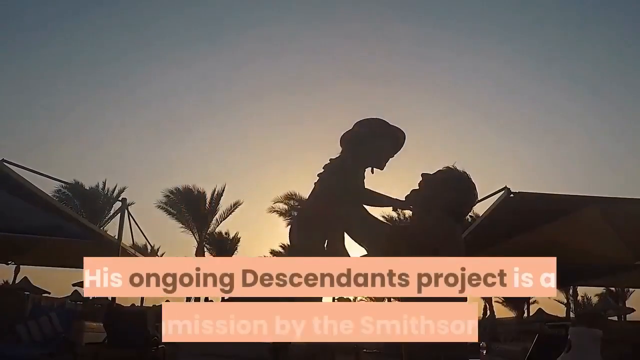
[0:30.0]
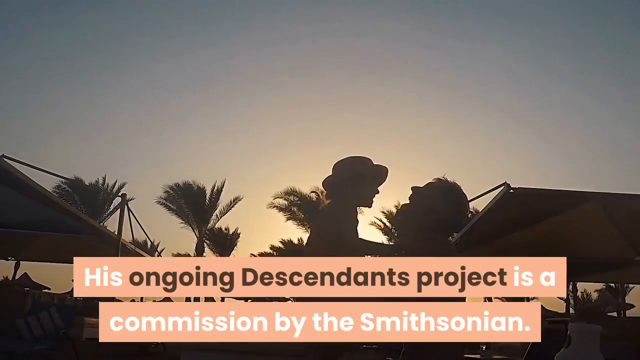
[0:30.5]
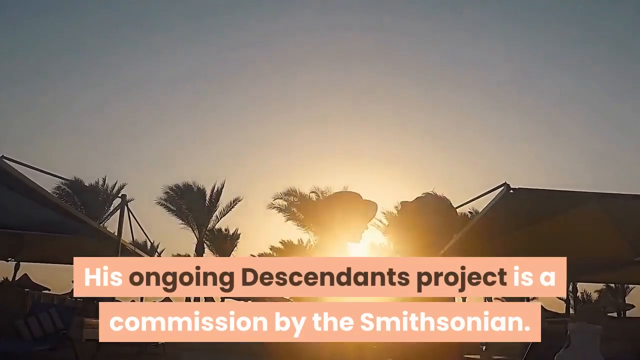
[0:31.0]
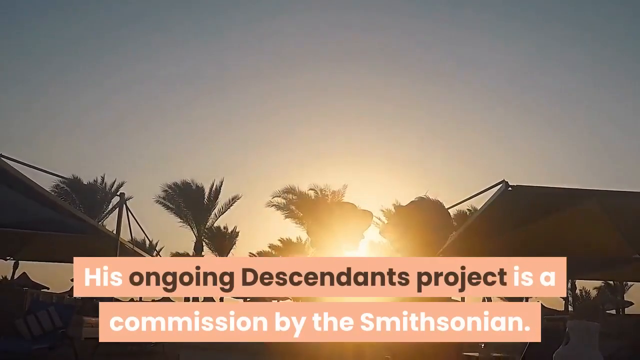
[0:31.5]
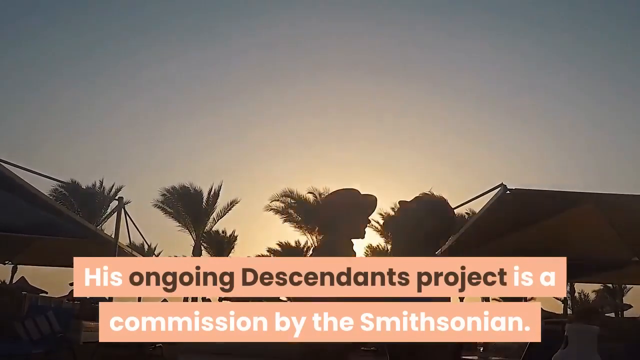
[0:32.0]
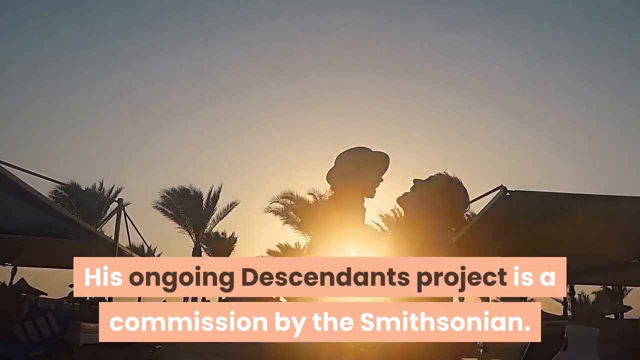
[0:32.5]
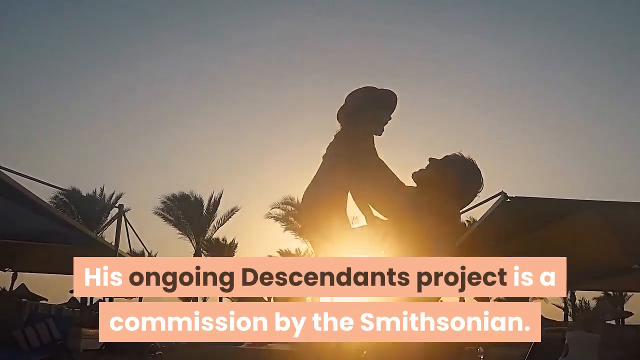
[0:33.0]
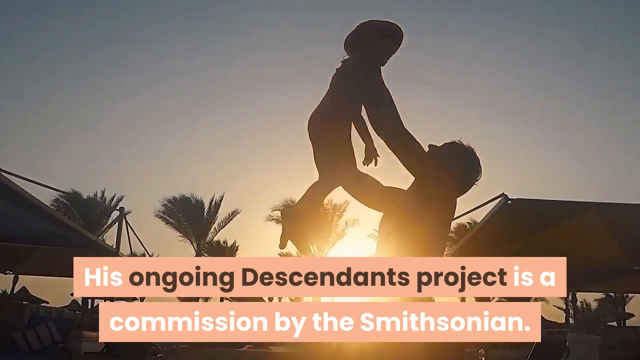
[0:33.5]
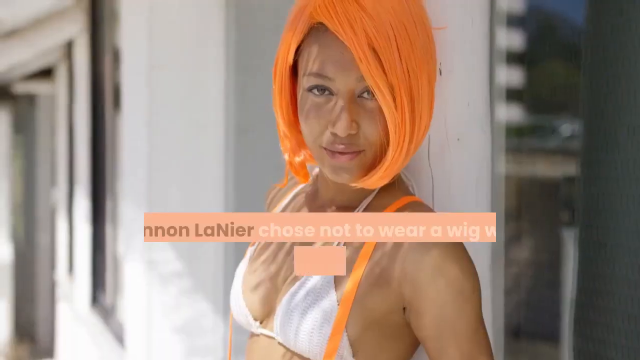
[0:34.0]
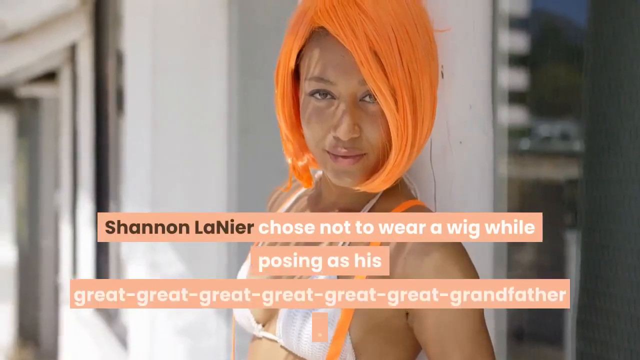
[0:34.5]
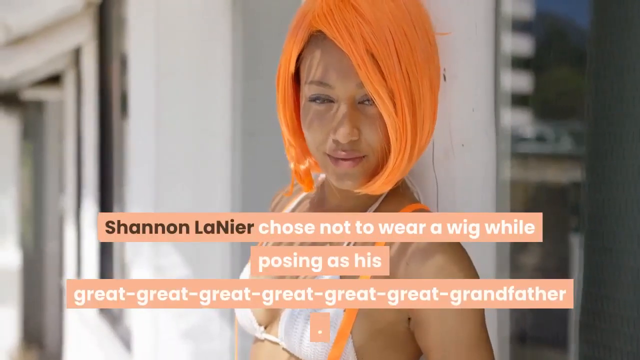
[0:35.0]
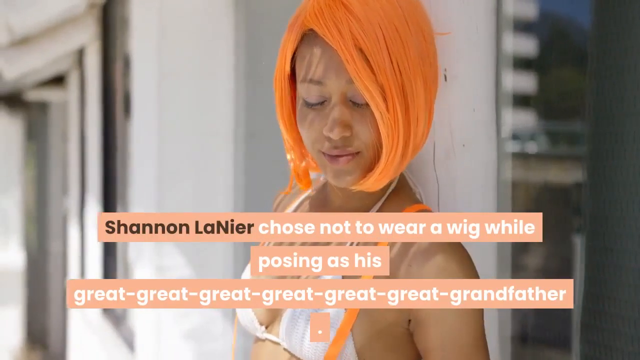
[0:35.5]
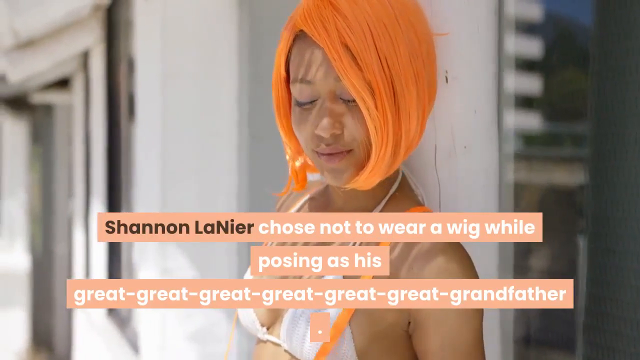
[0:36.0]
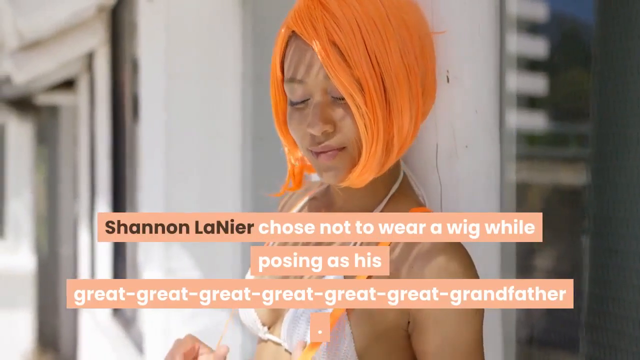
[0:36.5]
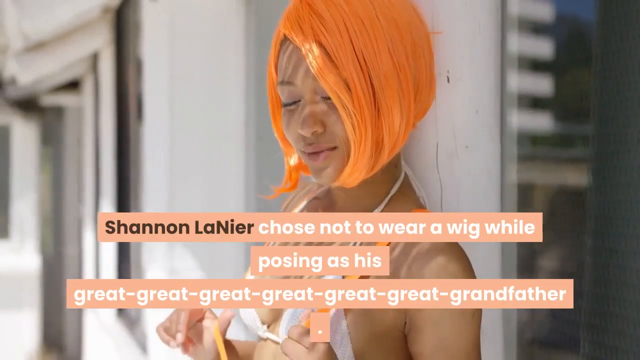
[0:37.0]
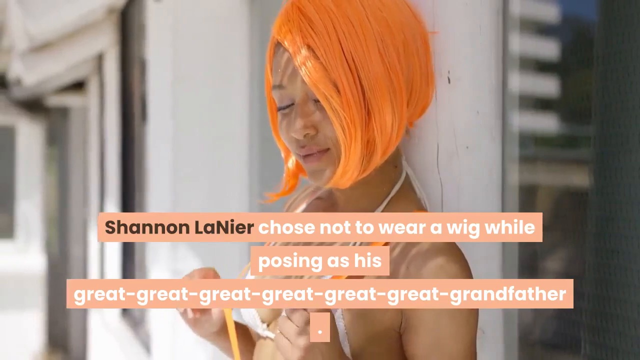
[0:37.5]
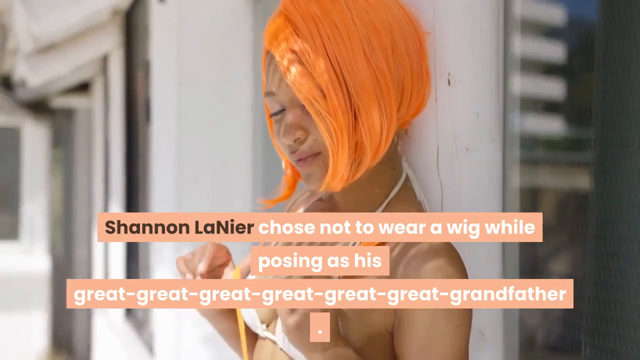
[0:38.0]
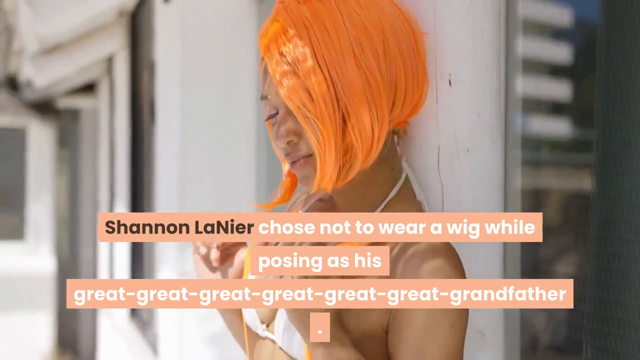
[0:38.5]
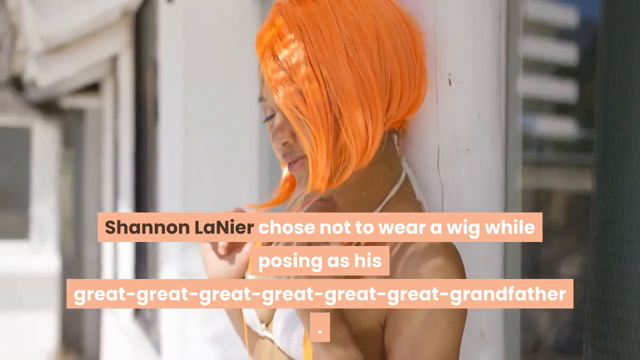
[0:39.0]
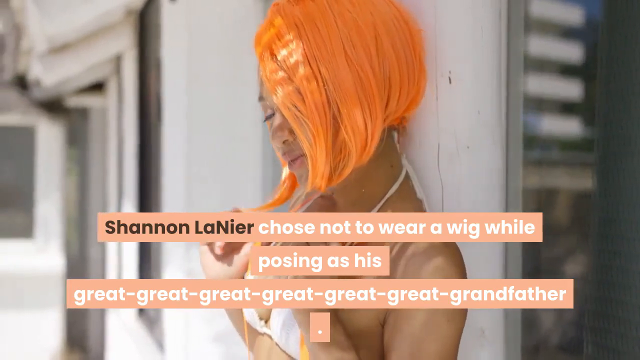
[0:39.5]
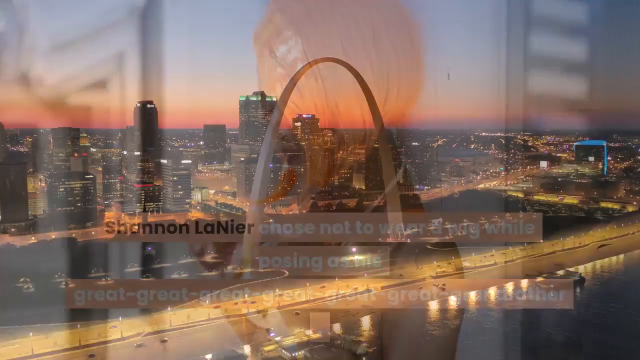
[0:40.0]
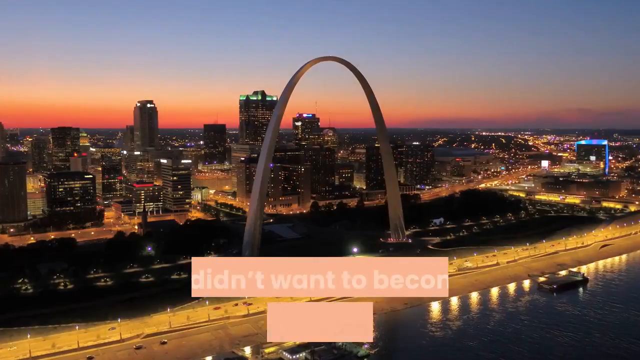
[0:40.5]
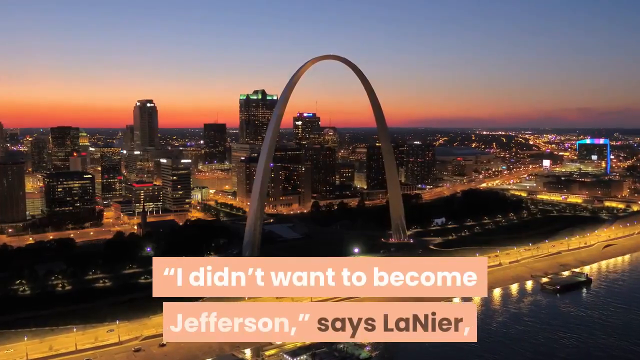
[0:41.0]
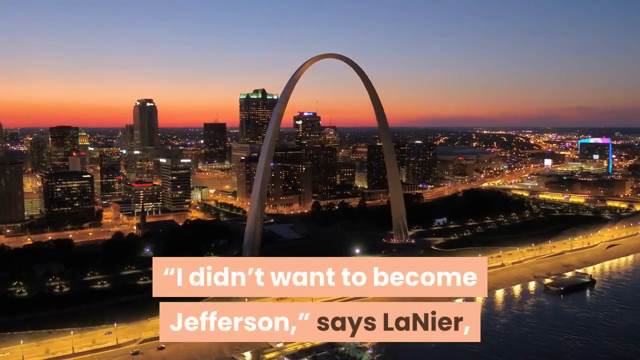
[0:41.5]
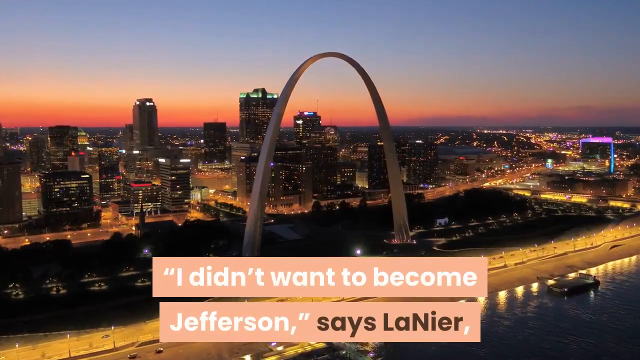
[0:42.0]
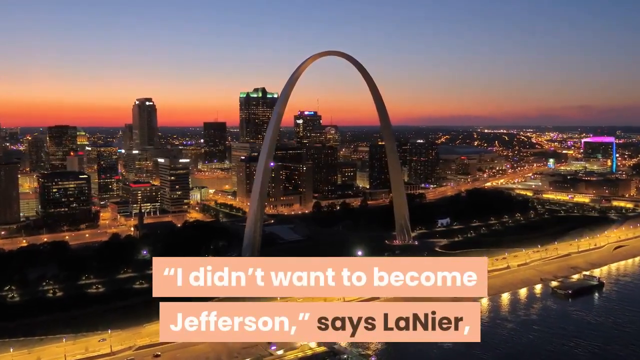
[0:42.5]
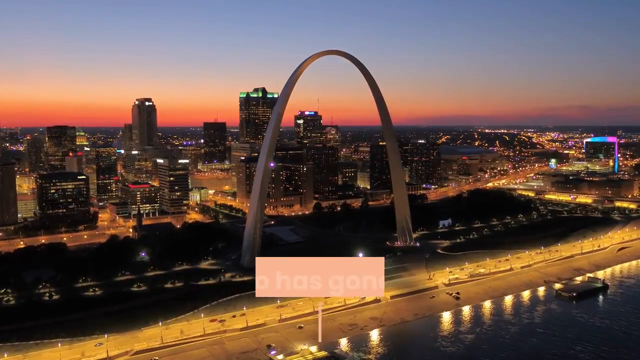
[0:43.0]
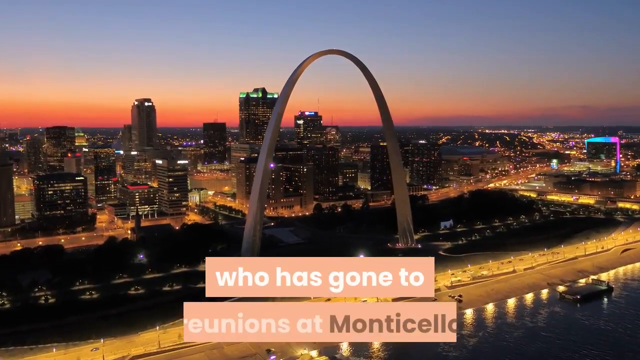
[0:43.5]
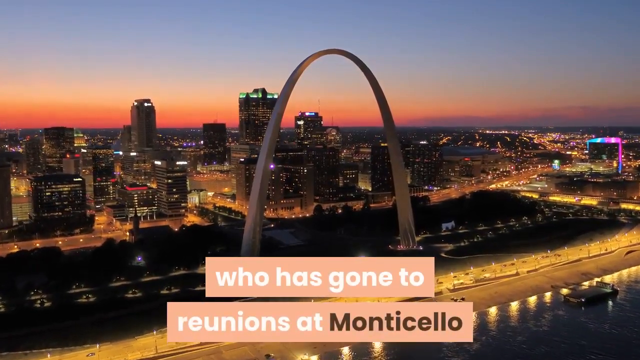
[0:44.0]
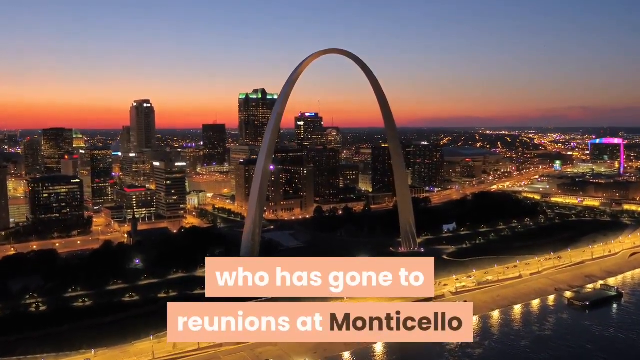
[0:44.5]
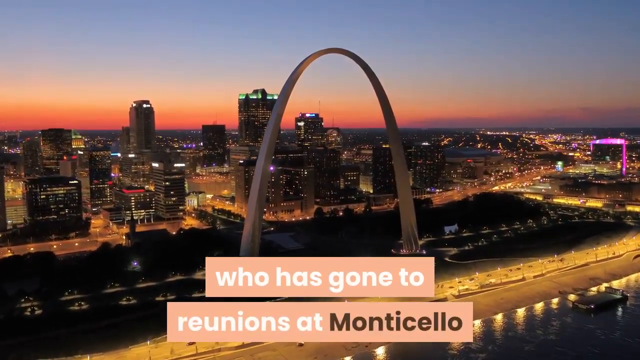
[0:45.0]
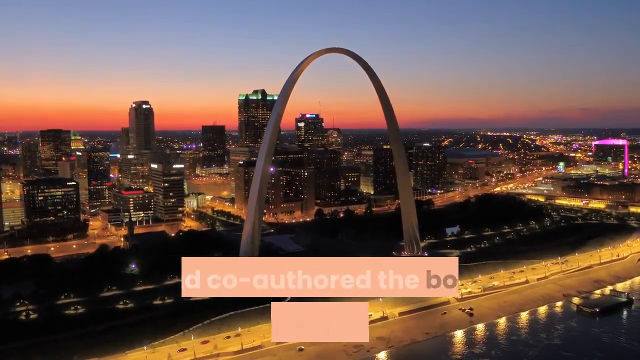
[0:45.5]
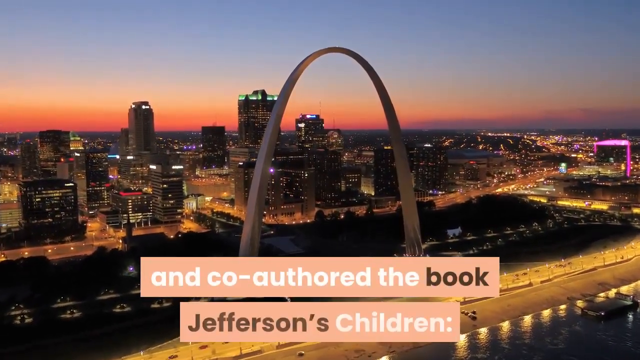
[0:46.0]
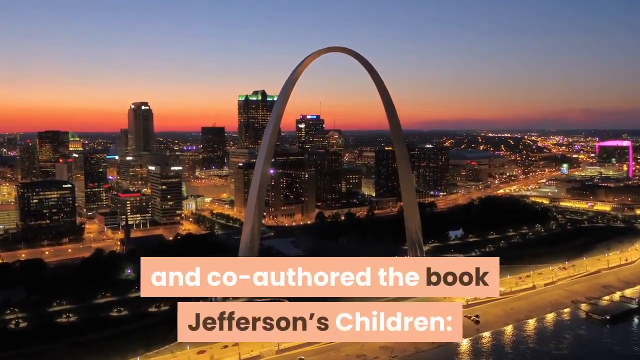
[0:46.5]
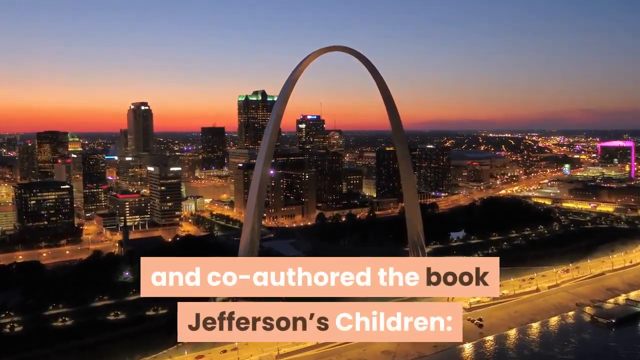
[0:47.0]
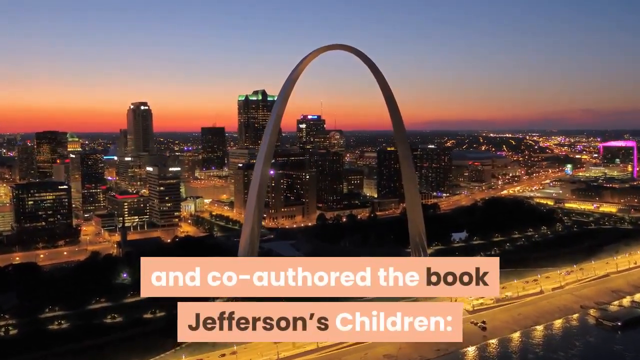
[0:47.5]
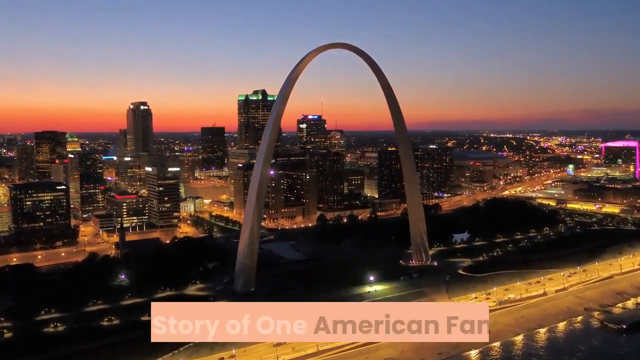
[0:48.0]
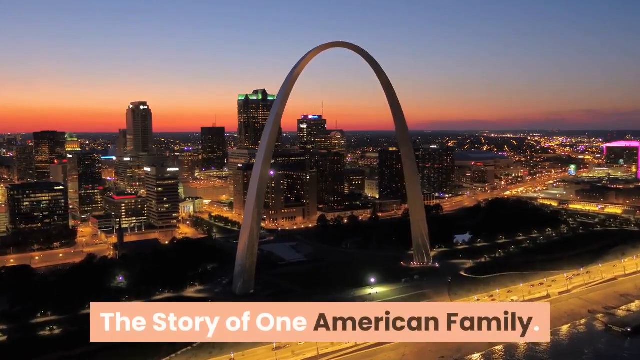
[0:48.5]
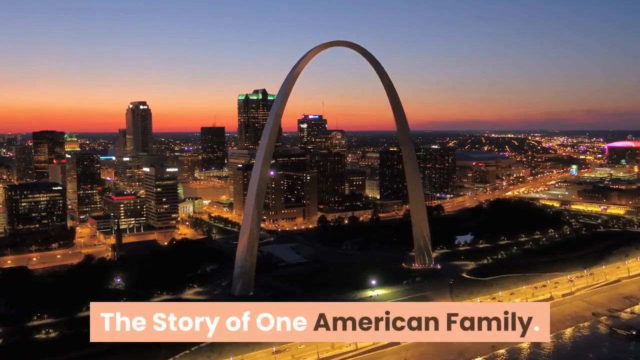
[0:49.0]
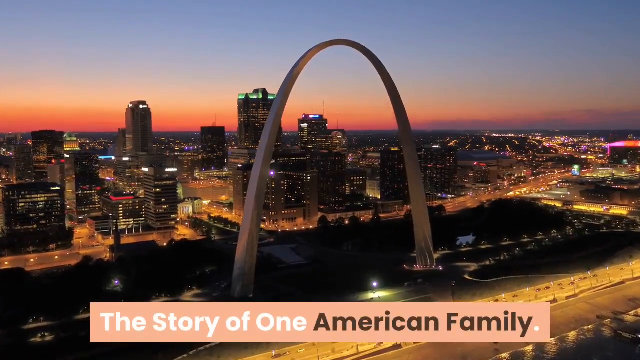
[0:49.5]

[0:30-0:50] The text continues while the background changes to what appears to be an adult holding a child in the air against a scenic sunset with palm trees, in what appears to be a tropical place. The text reads: "his ongoing descendants project is a commission by the Smithsonian. Shannon Lanier chose not to wear a wig while posing as his great-great-great-great-great-great-grandfather." The background then shows a woman wearing an orange wig in an inverted bob style, standing against a building in what appears to be a sunny area. Here the text reads that Shannon Lanier "chose not to wear a wig while posing as his great-great-great-great-great-grandfather." The text continues with a quote: "I didn't want to become Jefferson, says Lanier, who has gone to reunions at Monticello and co-authored the book Jefferson's Children. The story of one American family."